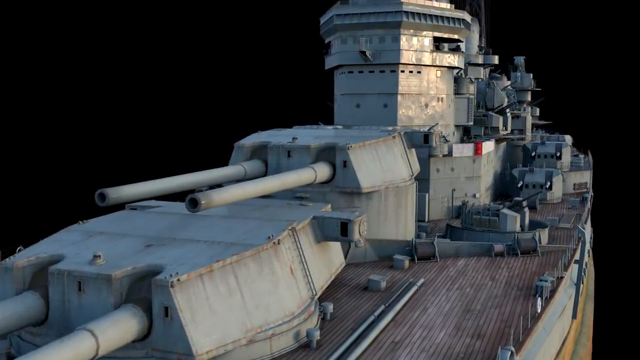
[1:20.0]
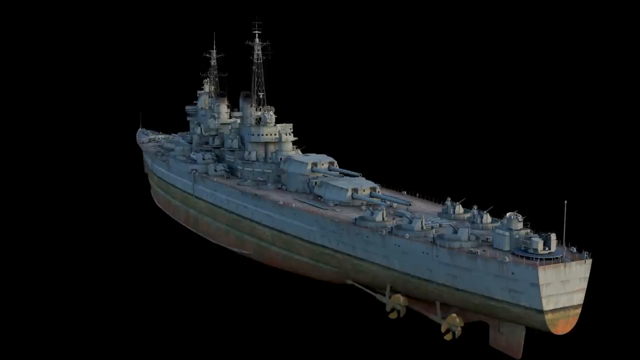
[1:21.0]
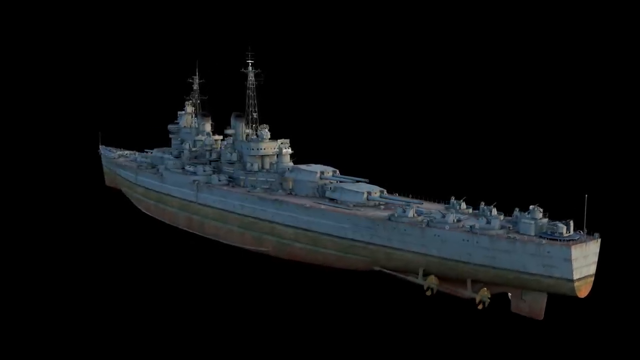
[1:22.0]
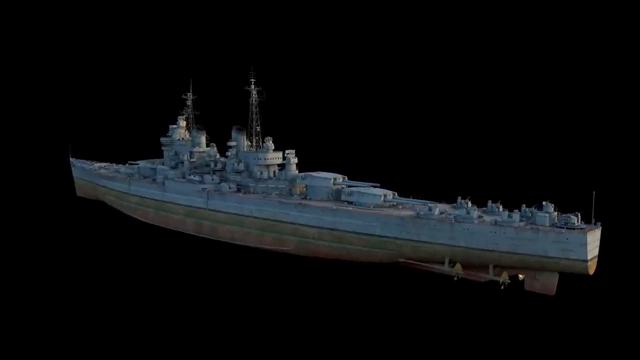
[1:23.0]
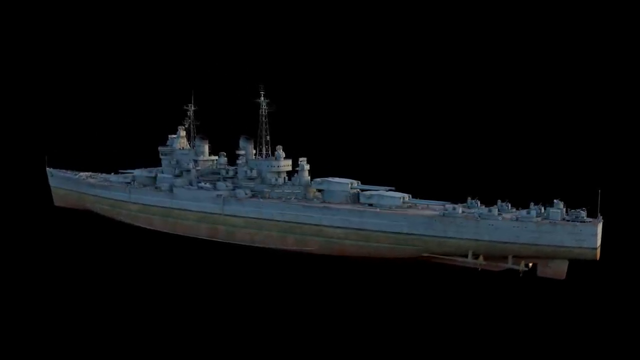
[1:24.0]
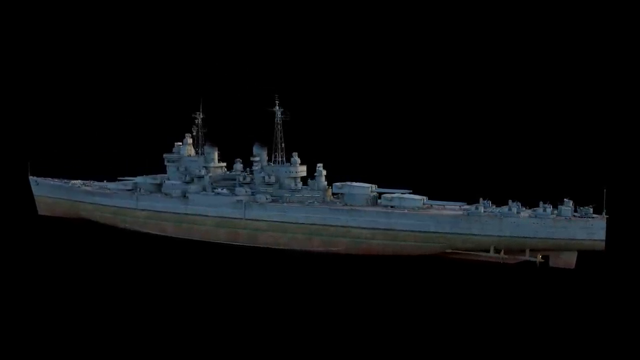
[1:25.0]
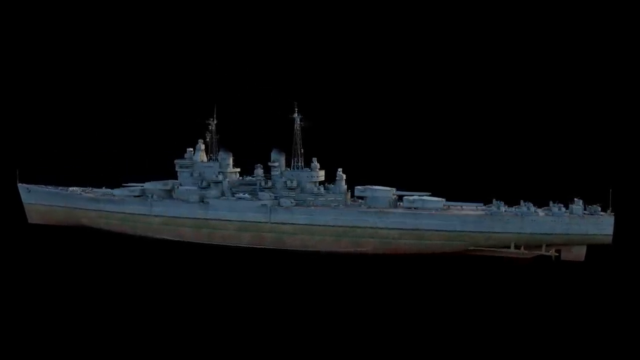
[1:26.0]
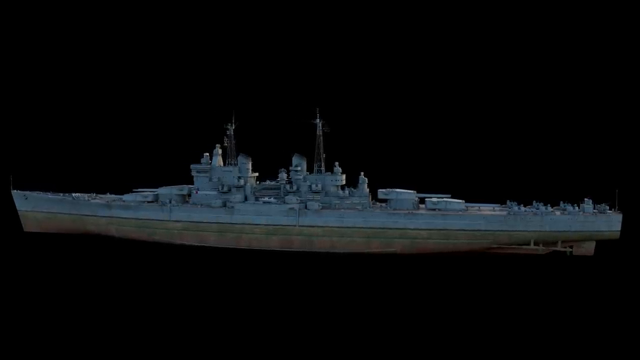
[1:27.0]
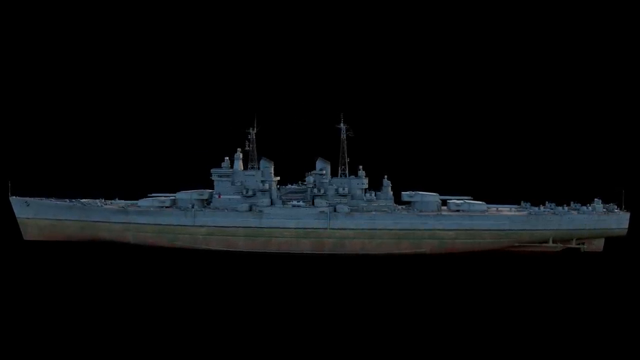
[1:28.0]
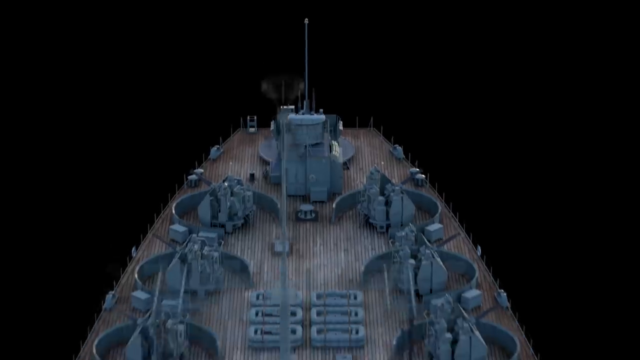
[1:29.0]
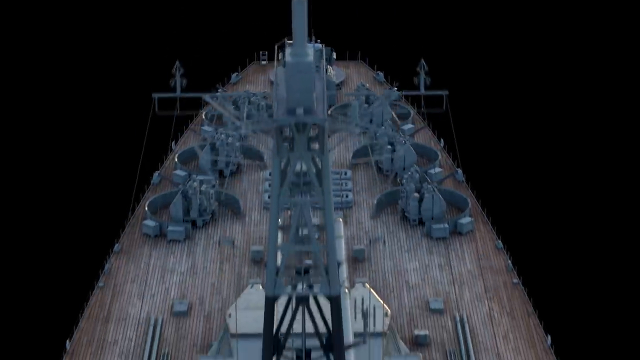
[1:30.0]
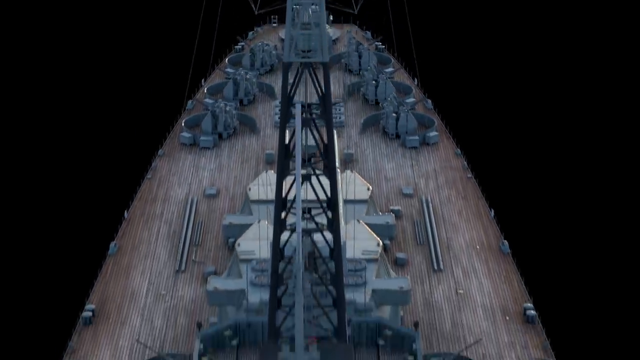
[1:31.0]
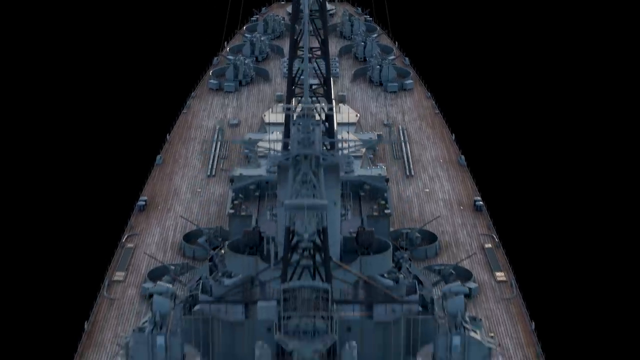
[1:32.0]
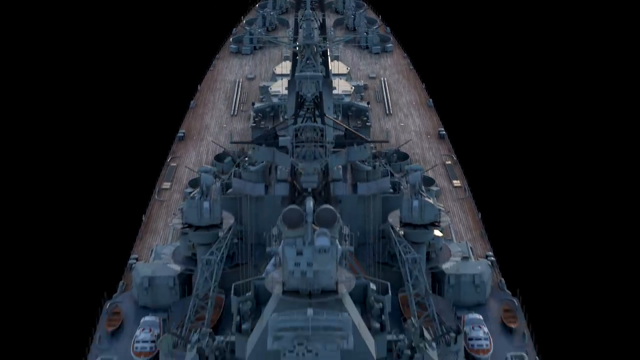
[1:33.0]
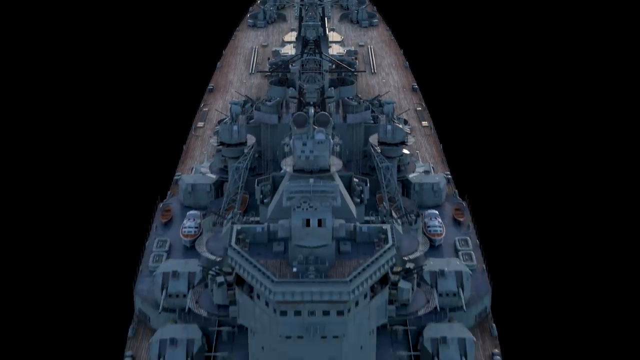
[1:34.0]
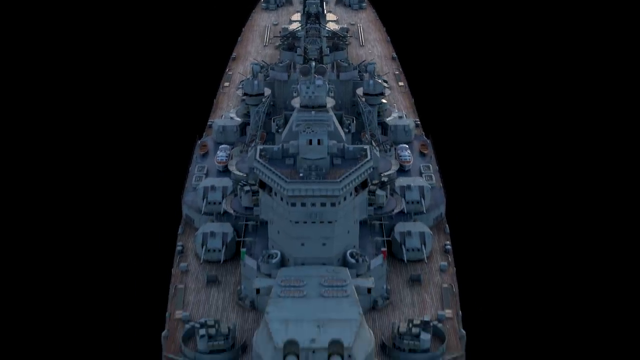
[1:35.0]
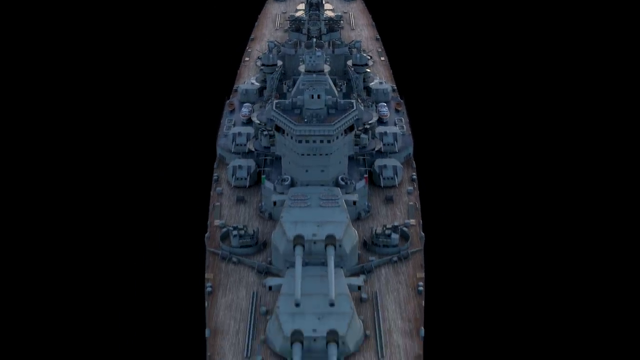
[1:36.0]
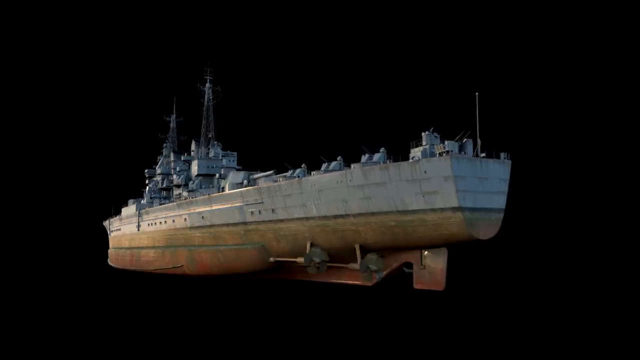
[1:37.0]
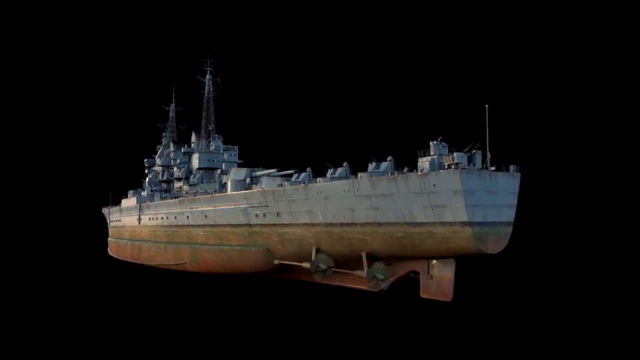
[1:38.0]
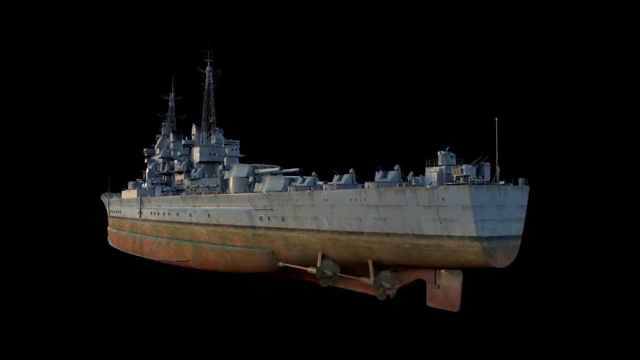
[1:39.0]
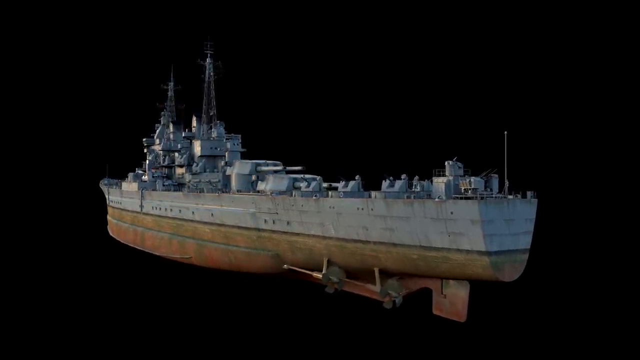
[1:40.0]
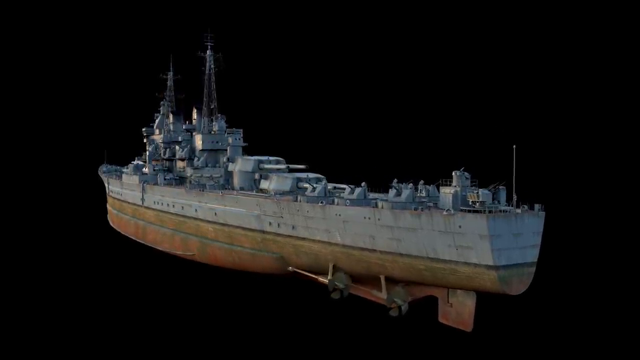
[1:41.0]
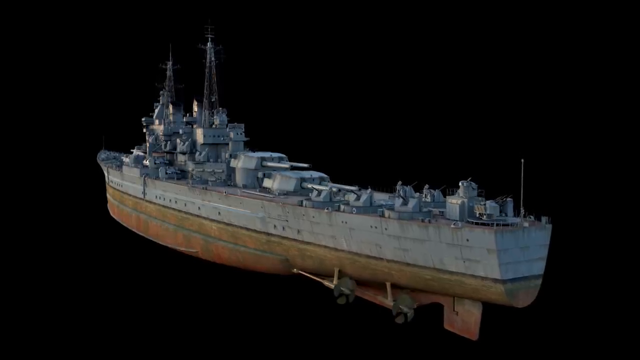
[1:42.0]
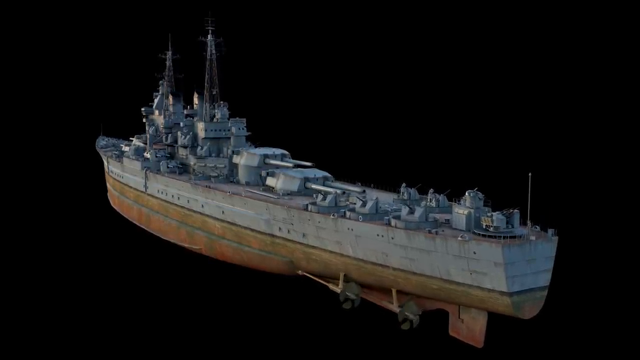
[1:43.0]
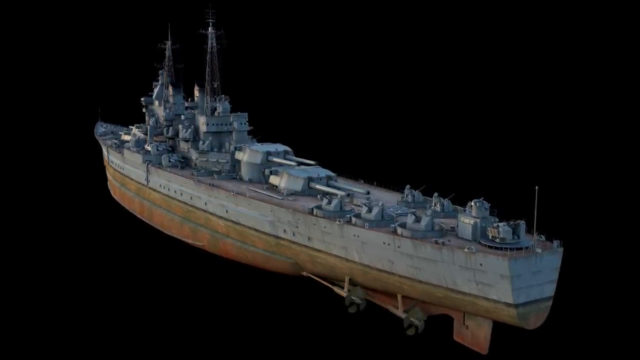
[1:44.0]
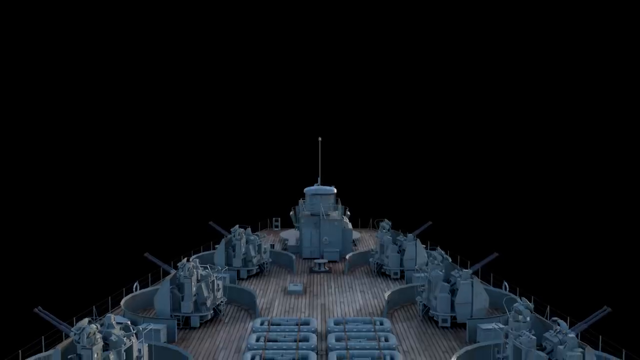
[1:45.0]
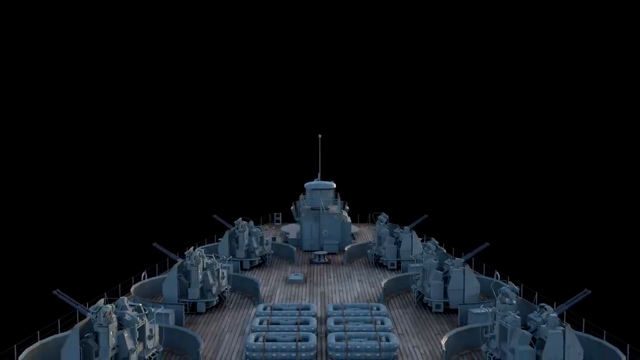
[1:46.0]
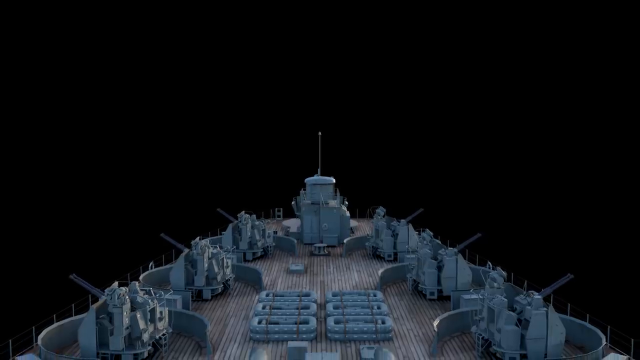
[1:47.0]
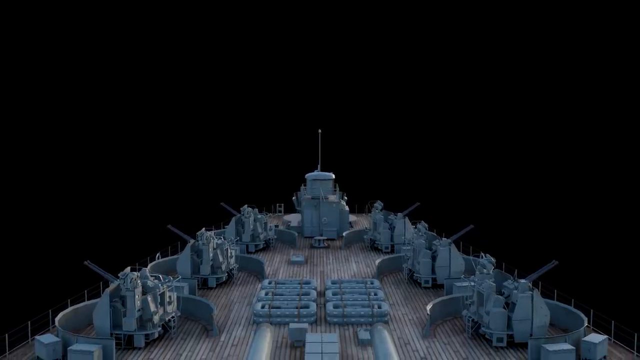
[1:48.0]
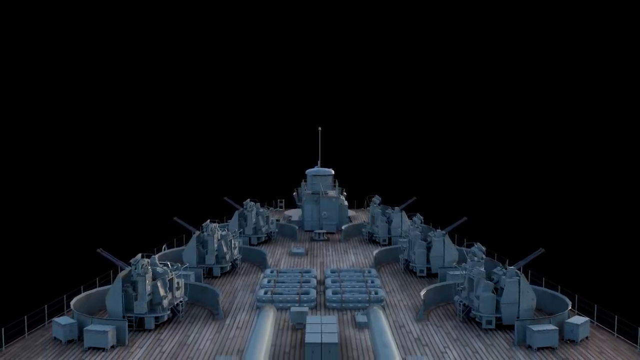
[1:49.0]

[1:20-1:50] The CGI rendering starts with a view of the entire ship, the front on the left side of the screen and the back on the right, including the very top and the underwater bottom. The underwater part of the ship is in shades of browns and yellows, while the very detailed top of the ship is all gray and looks very weathered. The rendering then turns around, going up to a top-down viewpoint and moving backwards from the front of the ship to the back, showing the details of the top parts of the ship. It then switches again to a view of the entire ship, including the bottom, against a black background, with lighting coming from the left side. The ship is viewed from all different angles.